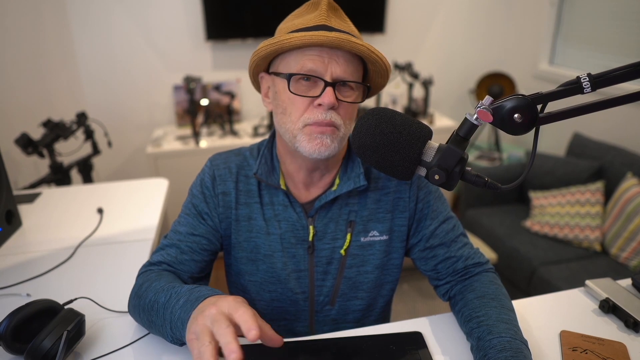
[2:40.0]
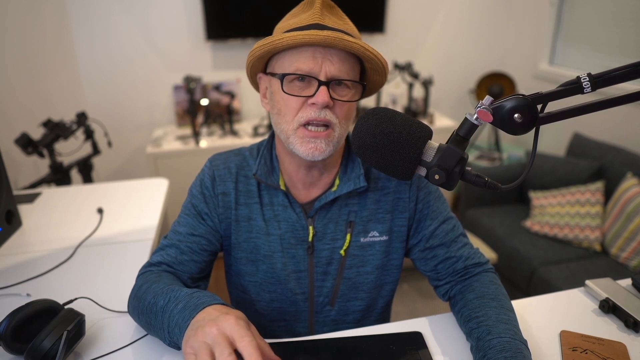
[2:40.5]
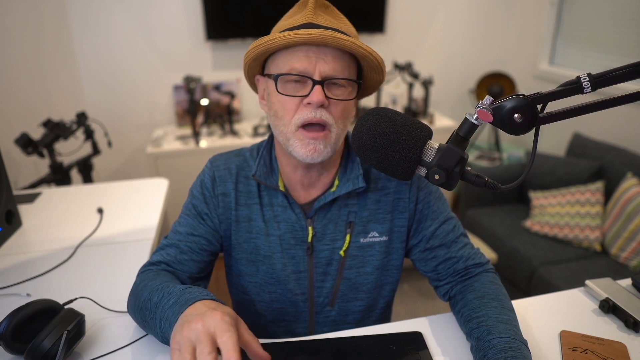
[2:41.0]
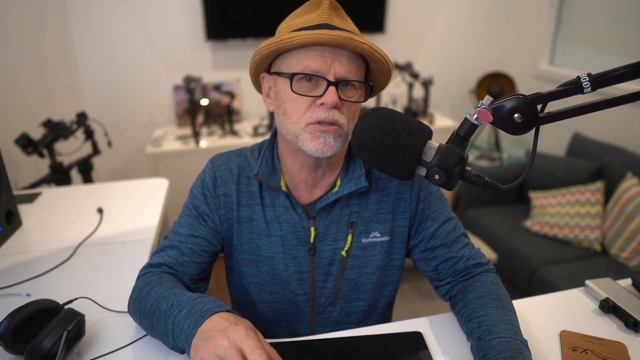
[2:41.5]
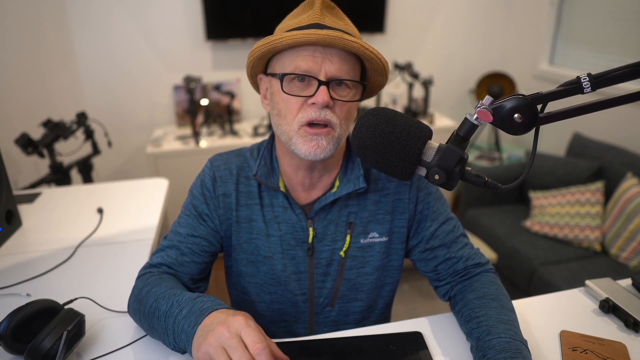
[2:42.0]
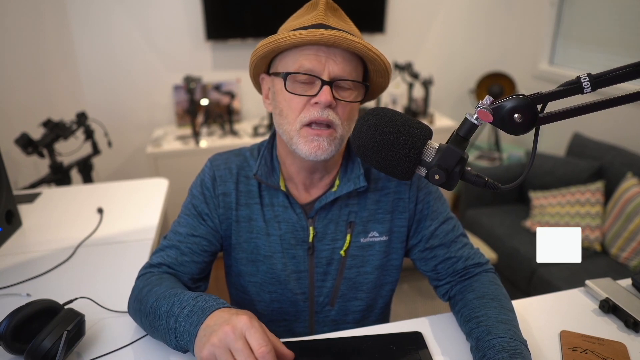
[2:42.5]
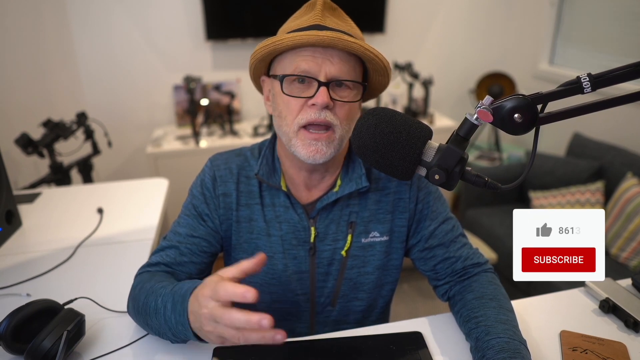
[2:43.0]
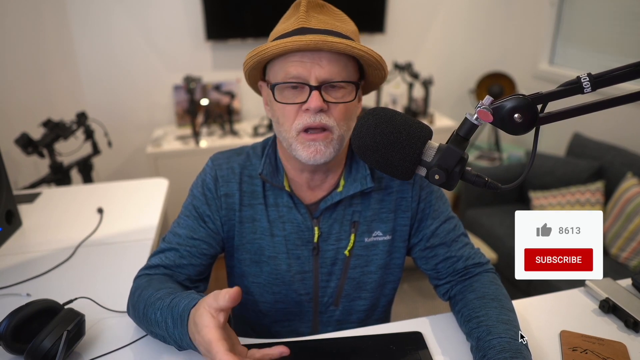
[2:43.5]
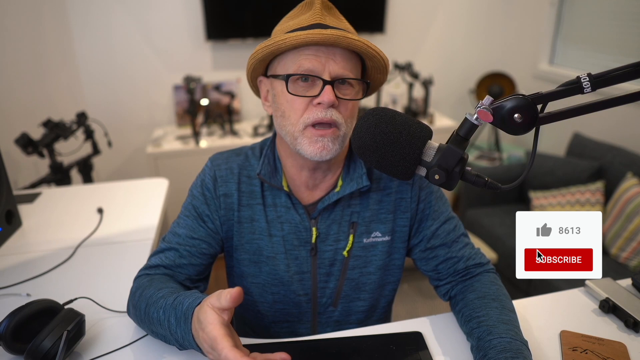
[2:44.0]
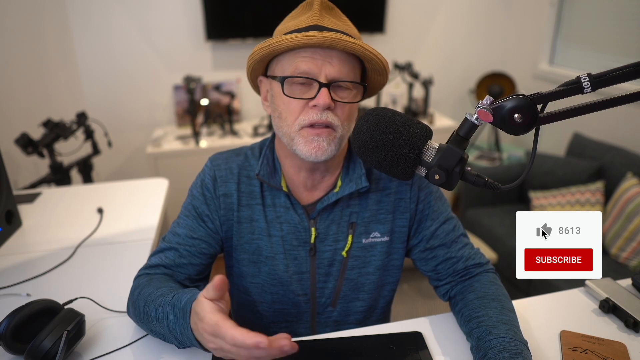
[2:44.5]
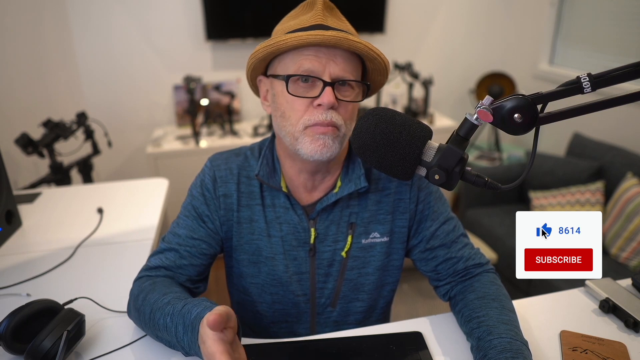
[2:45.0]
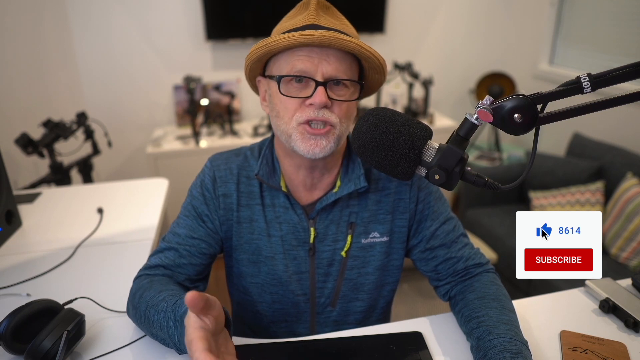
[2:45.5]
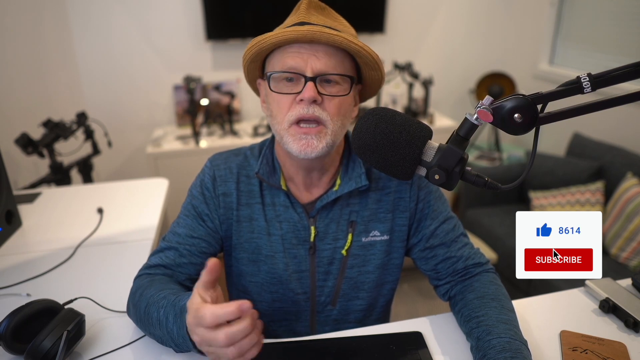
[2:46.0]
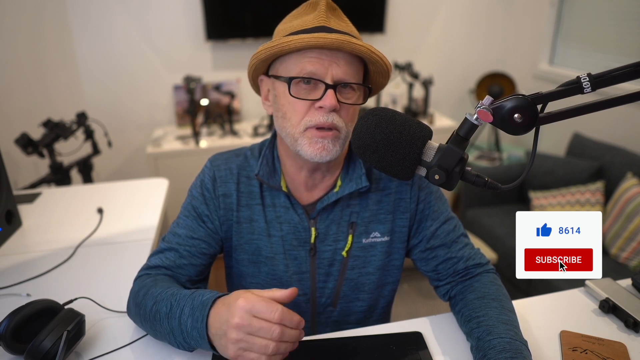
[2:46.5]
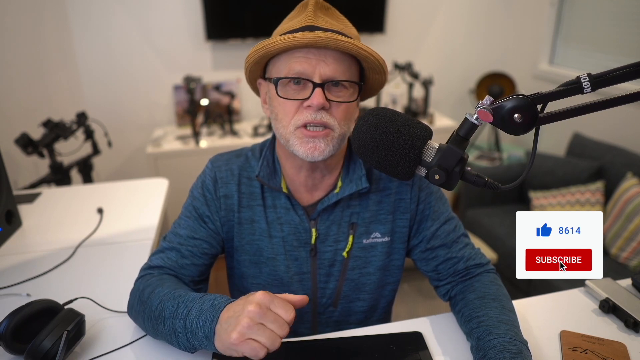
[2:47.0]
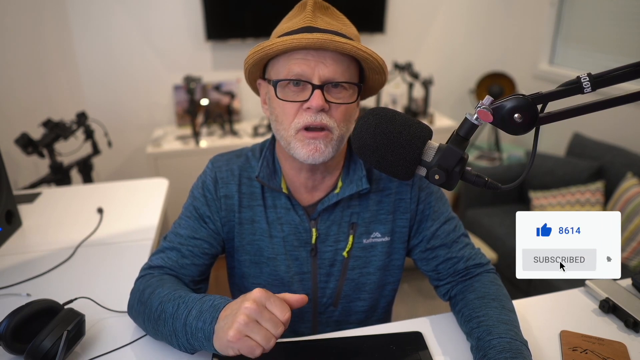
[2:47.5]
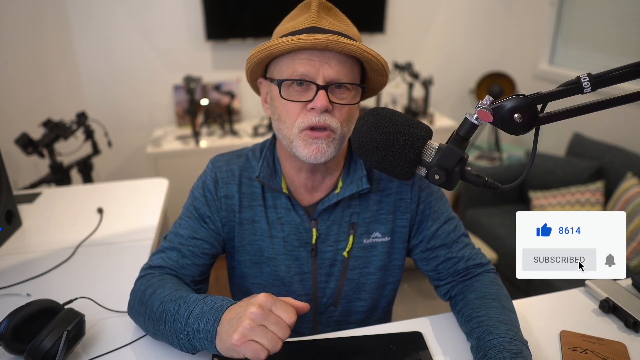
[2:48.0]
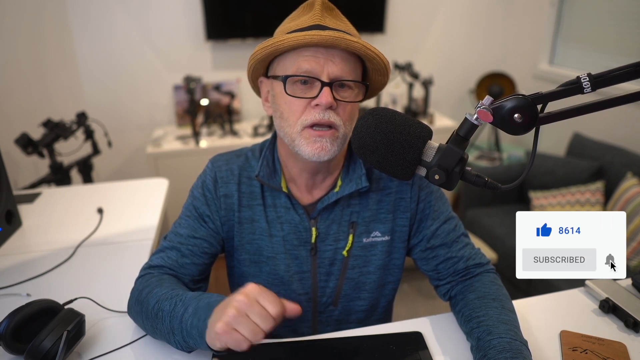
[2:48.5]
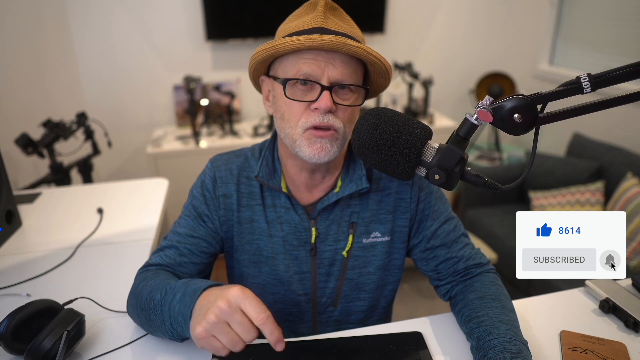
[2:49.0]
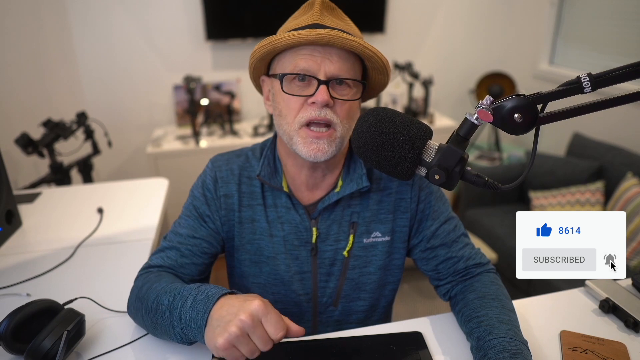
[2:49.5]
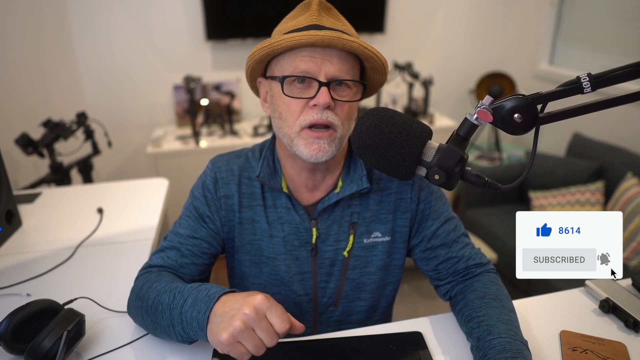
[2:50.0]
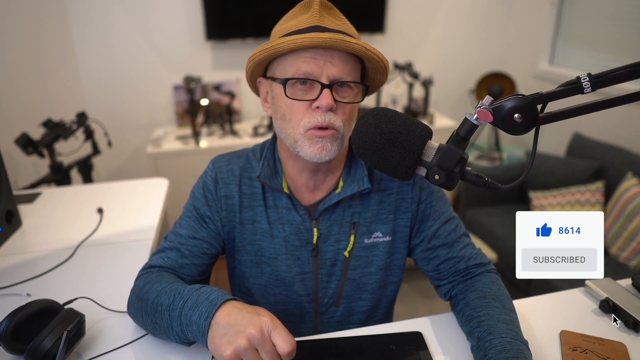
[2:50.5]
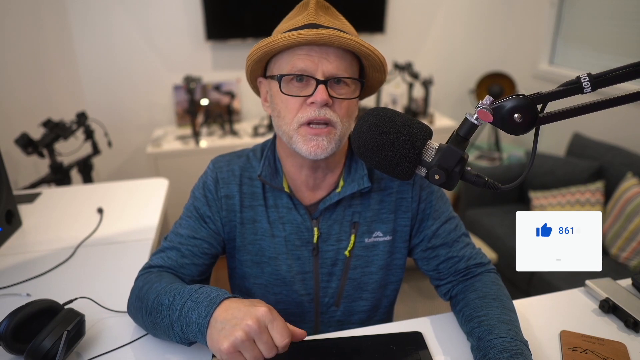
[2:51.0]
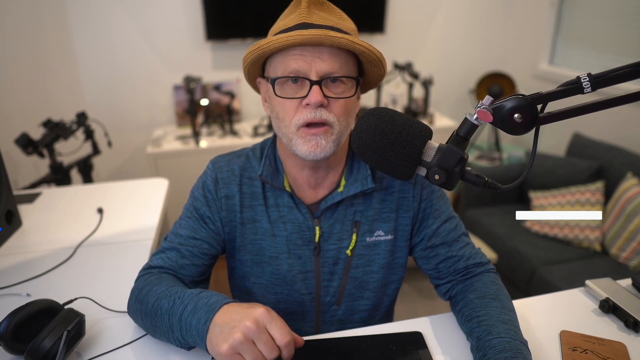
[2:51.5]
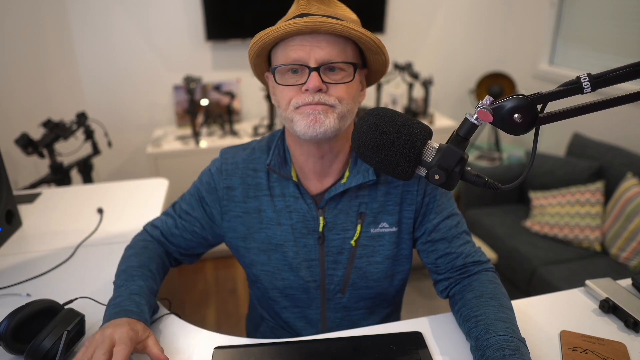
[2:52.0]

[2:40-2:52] The older gentleman is still talking, using the same hand. On the right side a white rectangle comes up with a red rectangle on its lower part, and it says "subscribe" in bold letters. Above it, "A614" appears in blue.